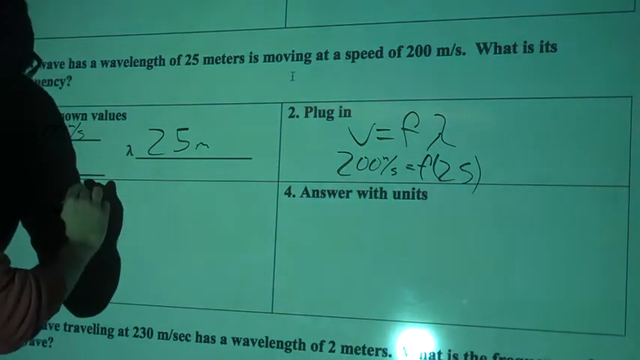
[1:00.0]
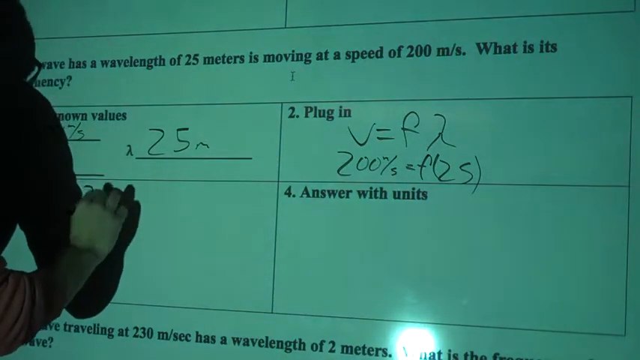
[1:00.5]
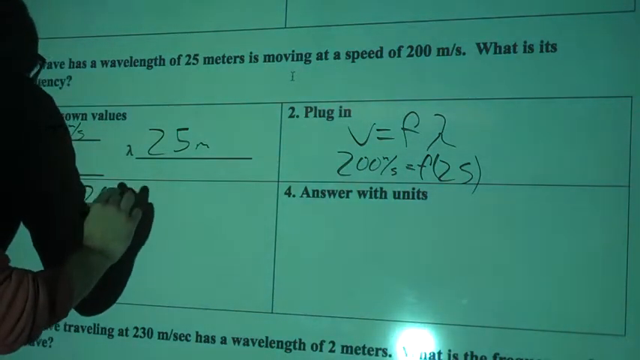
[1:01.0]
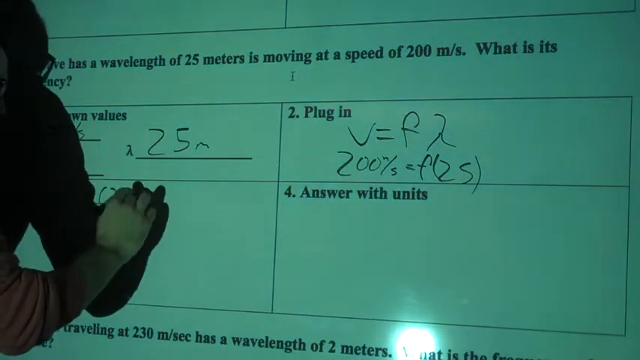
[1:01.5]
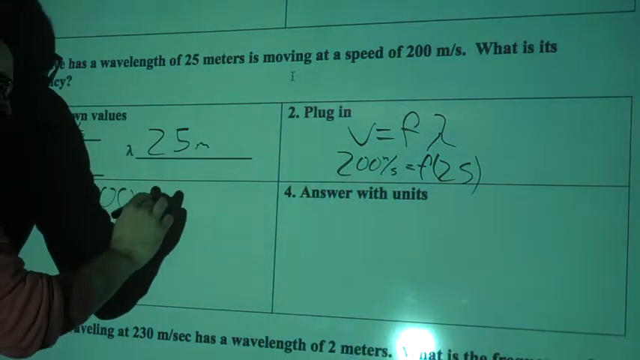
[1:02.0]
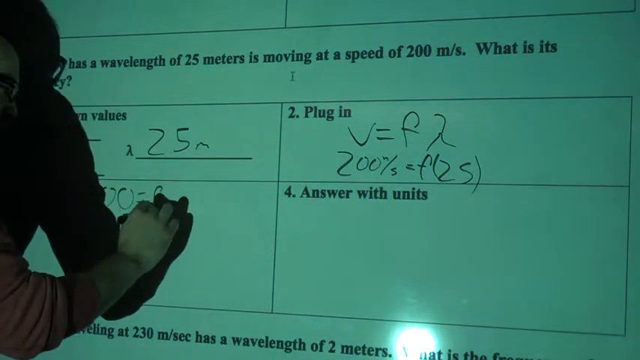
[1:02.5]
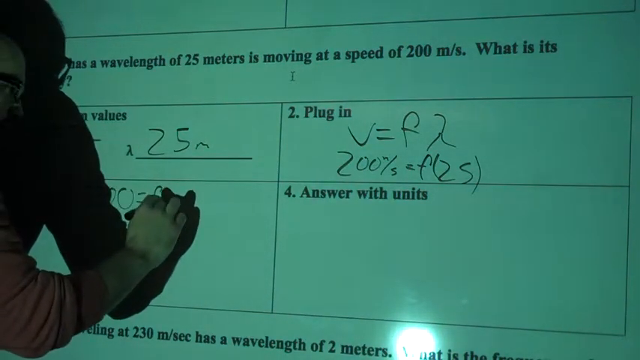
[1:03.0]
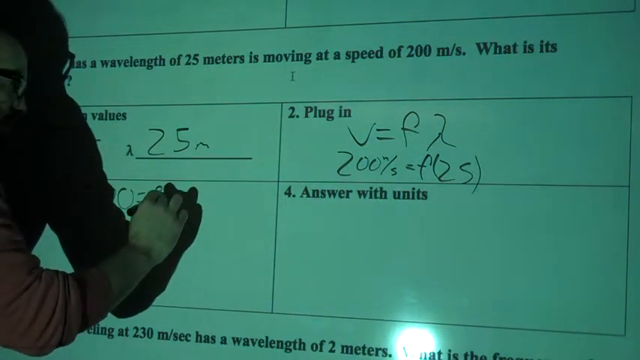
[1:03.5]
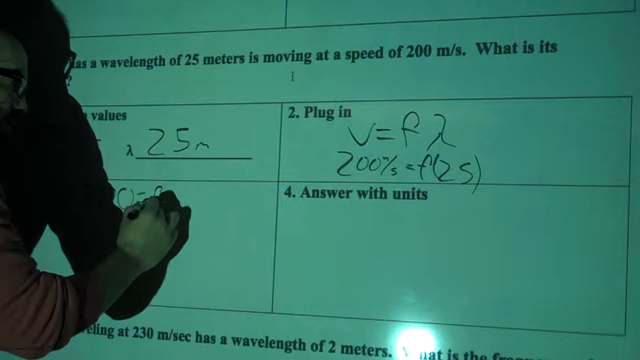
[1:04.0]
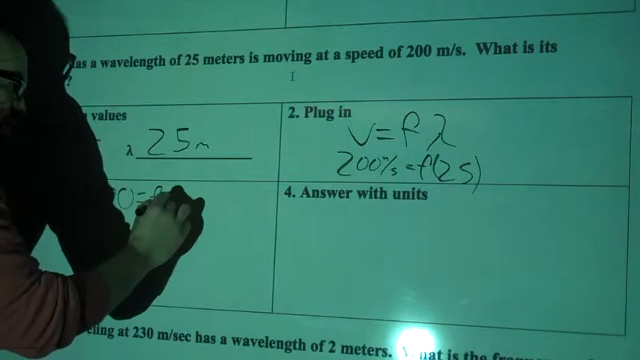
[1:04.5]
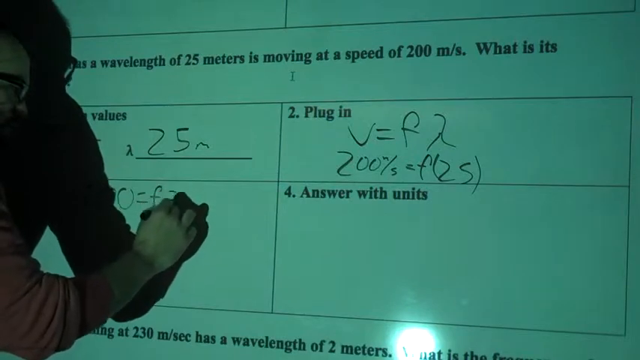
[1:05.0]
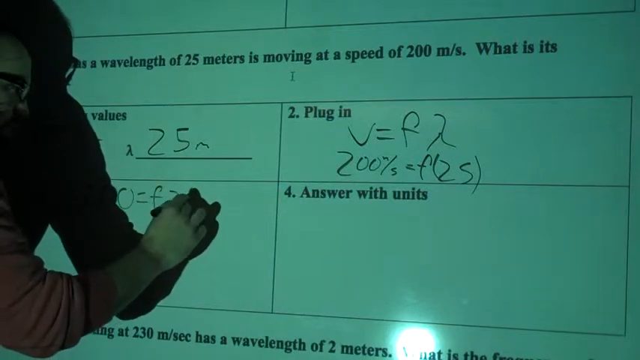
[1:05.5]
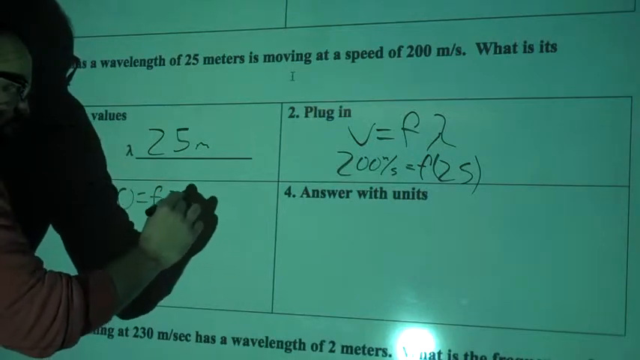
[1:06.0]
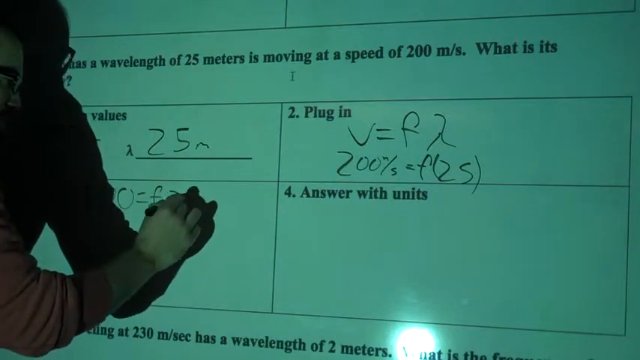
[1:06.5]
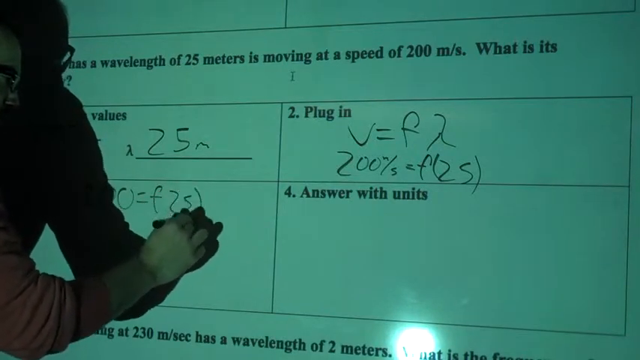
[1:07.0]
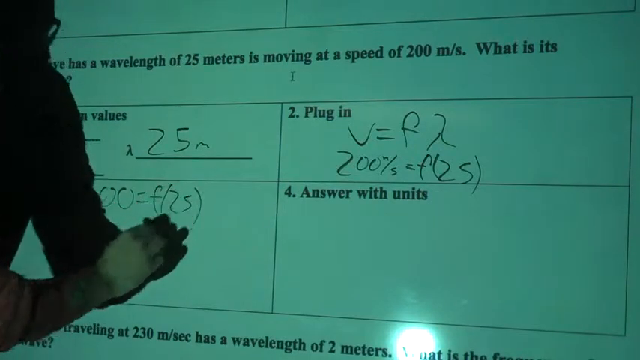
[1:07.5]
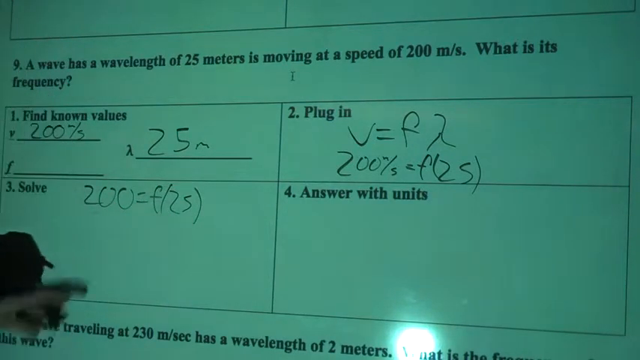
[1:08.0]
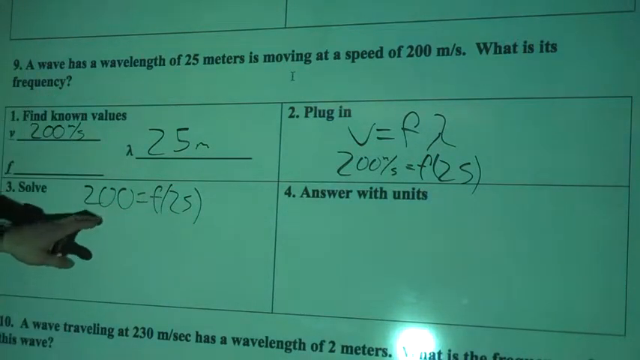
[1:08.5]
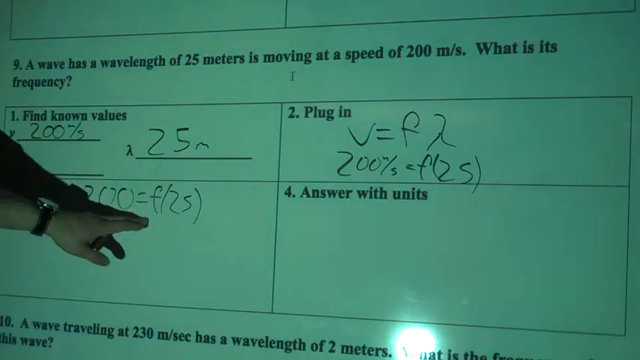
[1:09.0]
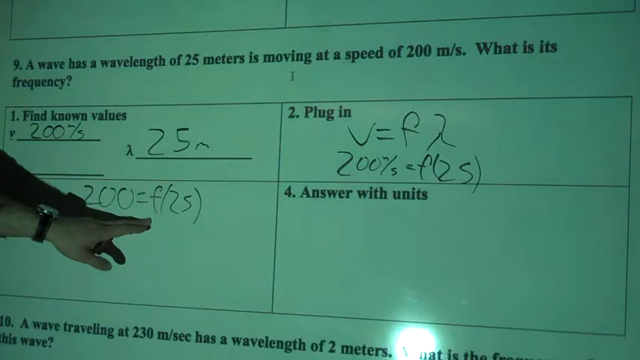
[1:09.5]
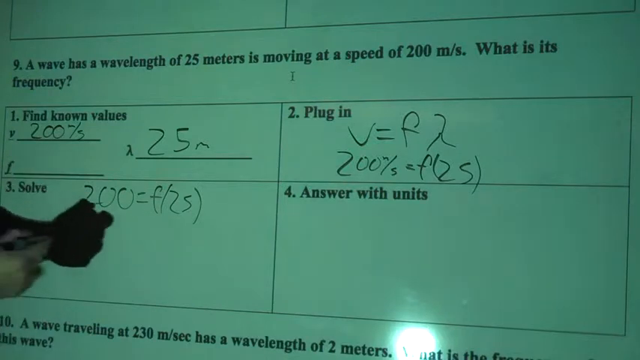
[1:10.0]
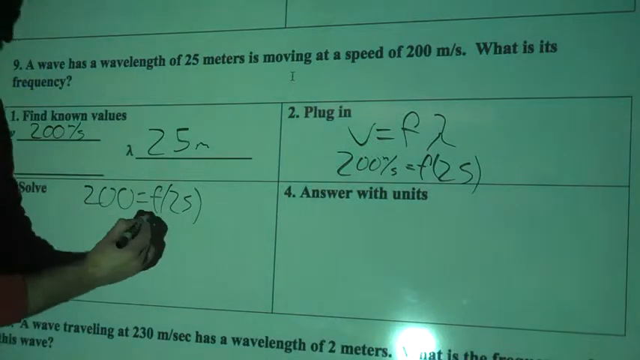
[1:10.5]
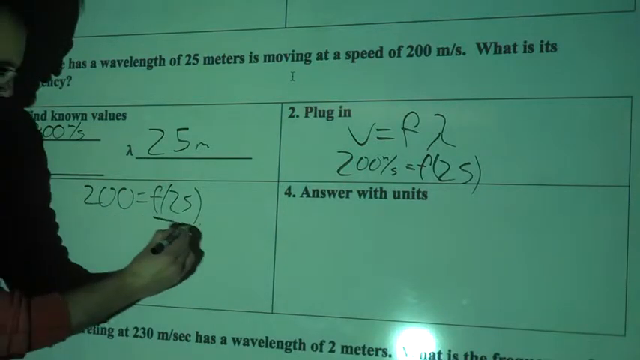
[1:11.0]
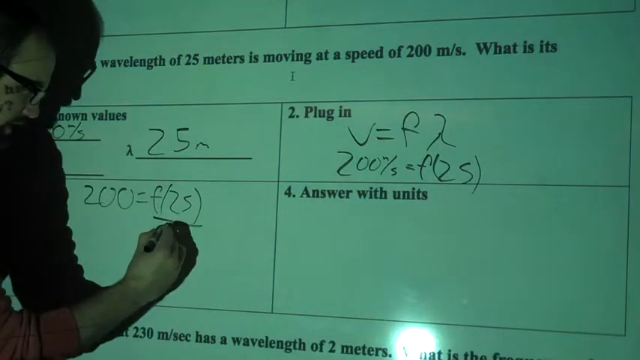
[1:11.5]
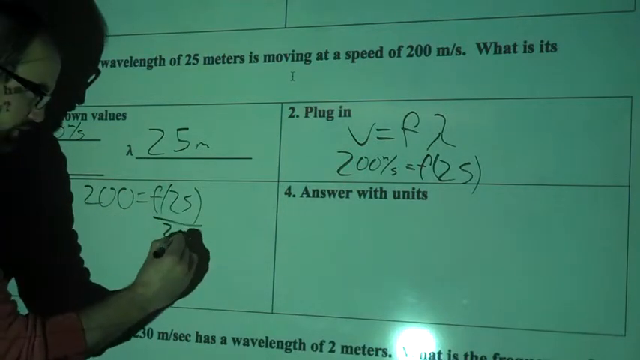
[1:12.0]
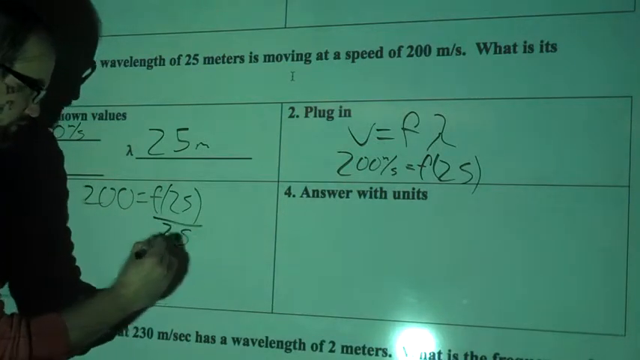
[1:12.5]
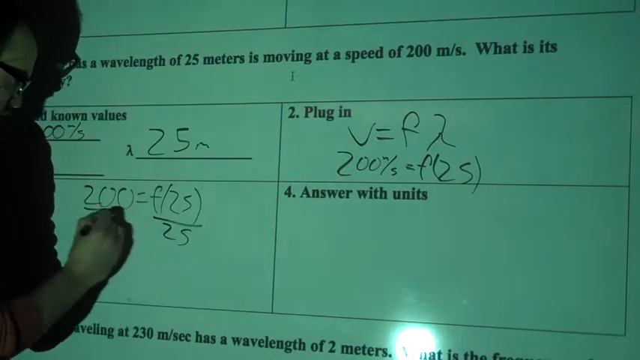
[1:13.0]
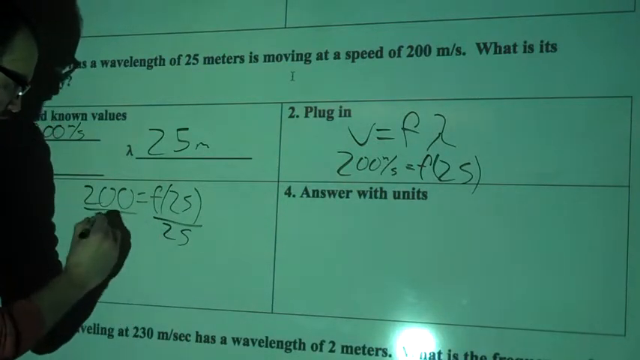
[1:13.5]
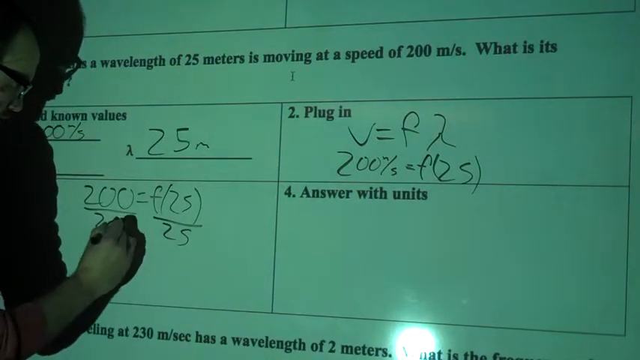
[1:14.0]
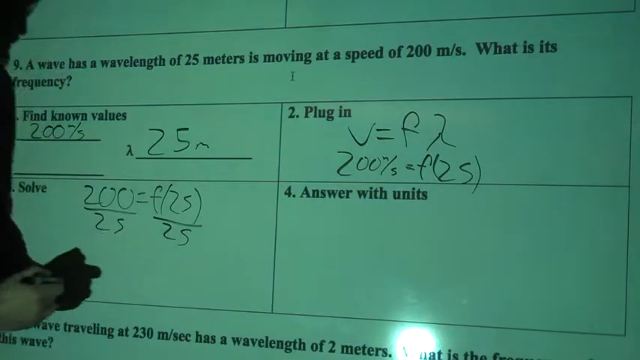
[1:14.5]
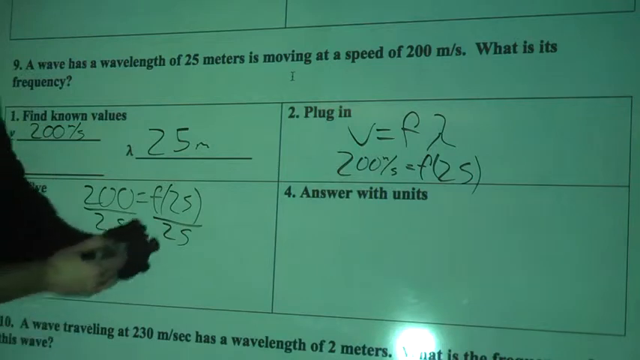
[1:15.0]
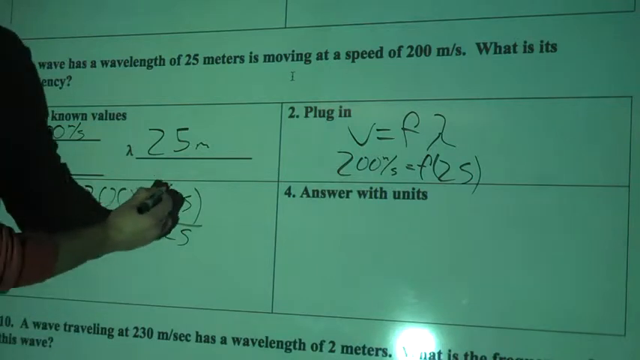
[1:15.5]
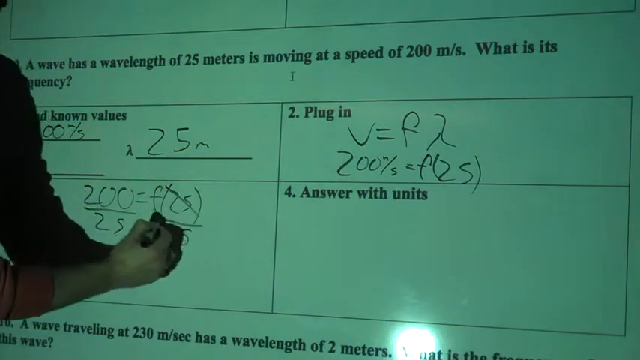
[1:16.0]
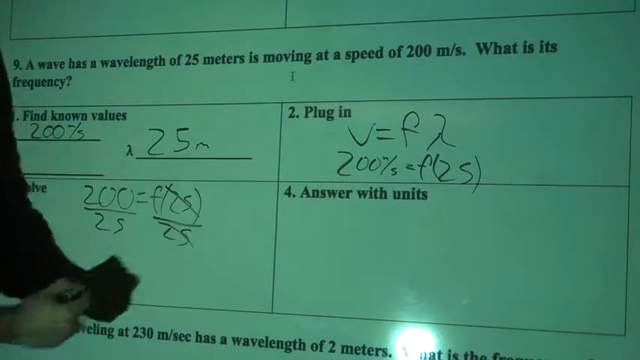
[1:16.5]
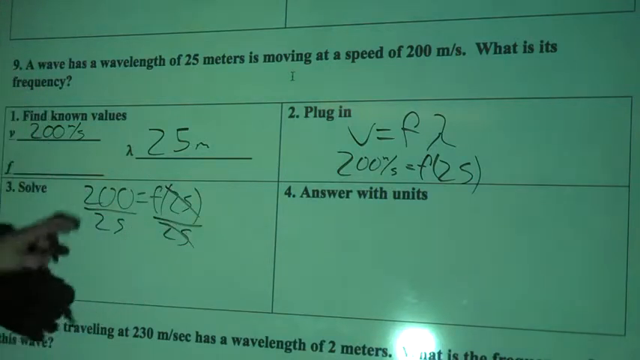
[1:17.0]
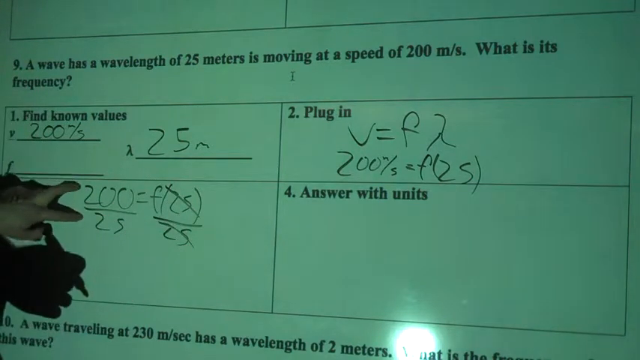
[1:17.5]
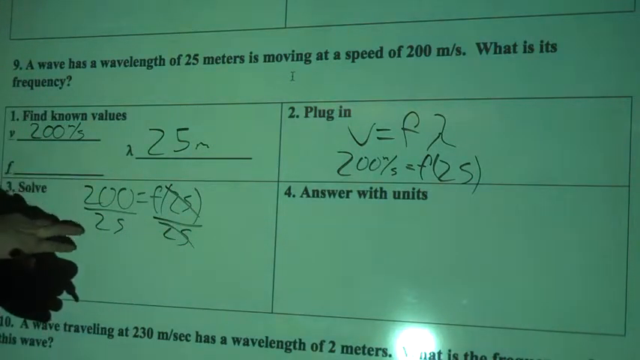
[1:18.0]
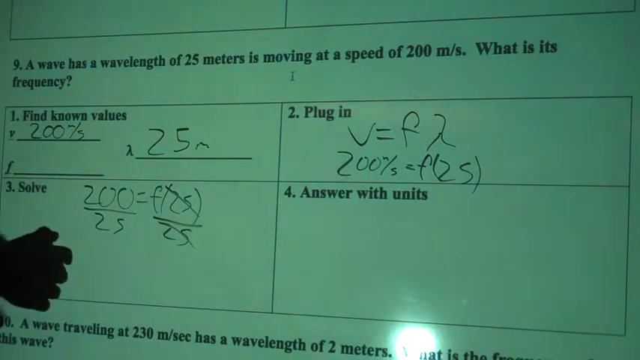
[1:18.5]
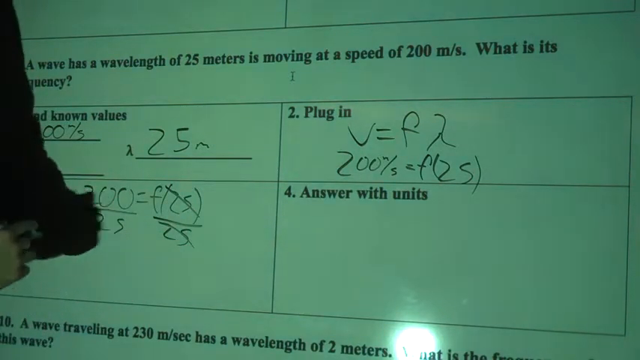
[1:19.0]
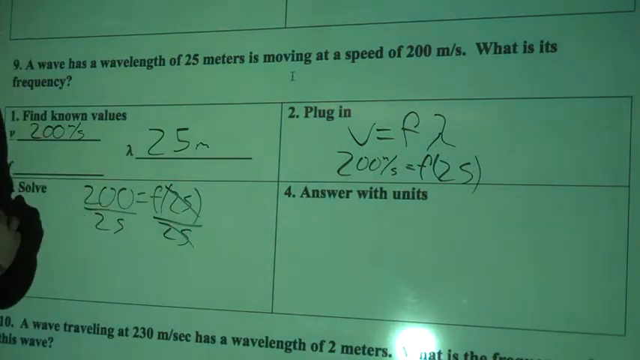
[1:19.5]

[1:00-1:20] The professor works in the third box, "solve." He writes 200 equals F (25), divides both sides by 25, and slashes out the 25 in the parentheses and the 25 at the bottom on the right side. He writes only with his right hand. The writing surface has a green hue, and the answers seem to be projected, possibly by a projector, though it is unclear whether he is writing on a whiteboard.